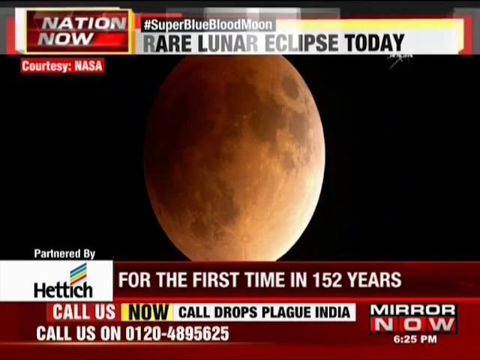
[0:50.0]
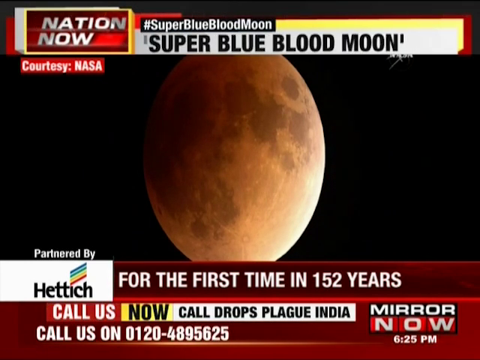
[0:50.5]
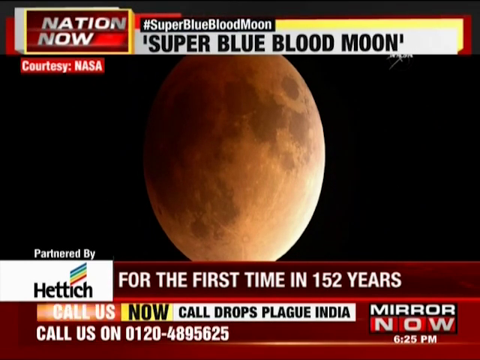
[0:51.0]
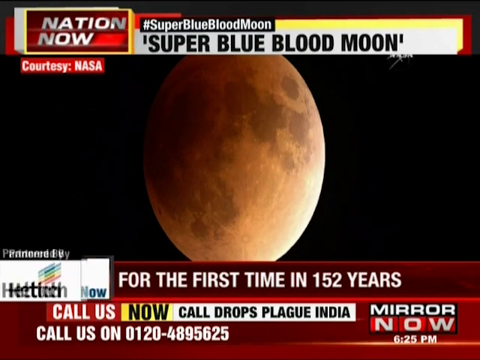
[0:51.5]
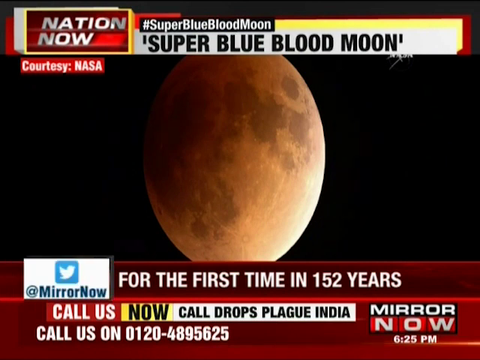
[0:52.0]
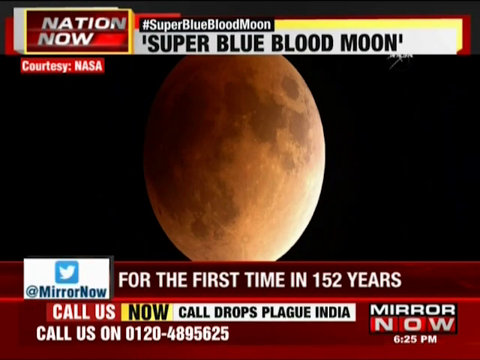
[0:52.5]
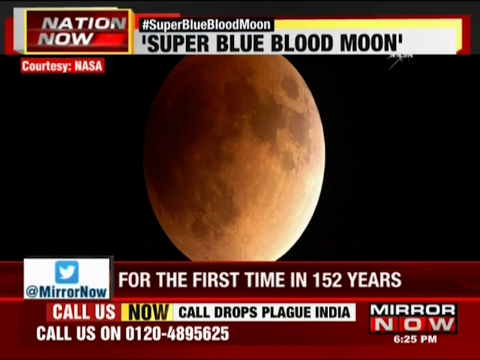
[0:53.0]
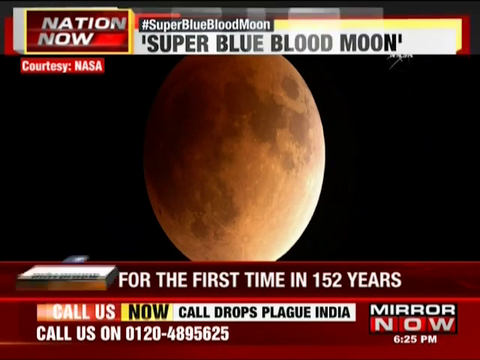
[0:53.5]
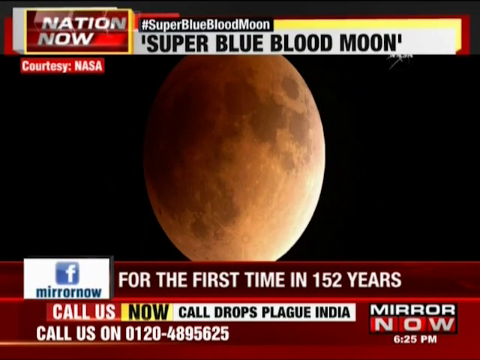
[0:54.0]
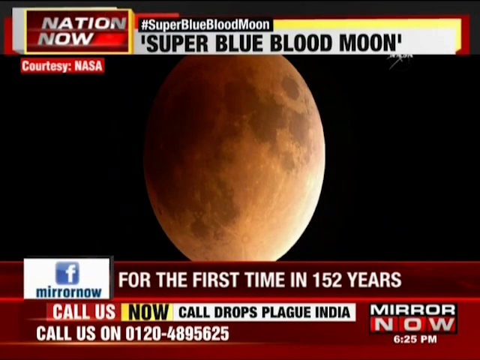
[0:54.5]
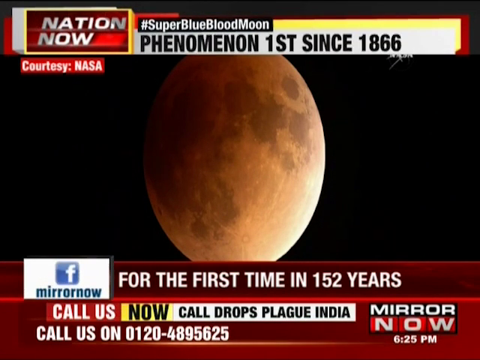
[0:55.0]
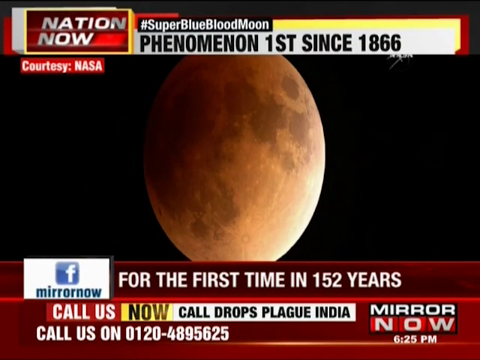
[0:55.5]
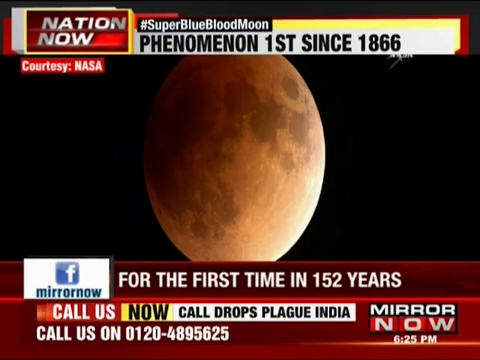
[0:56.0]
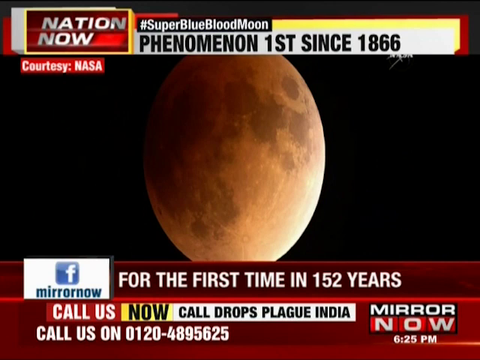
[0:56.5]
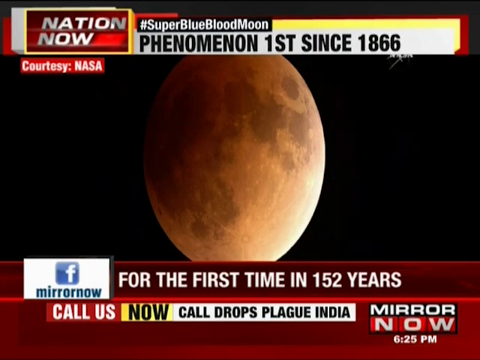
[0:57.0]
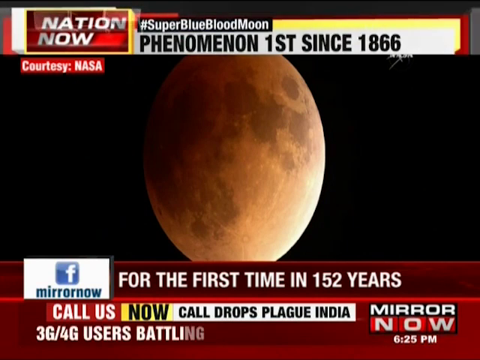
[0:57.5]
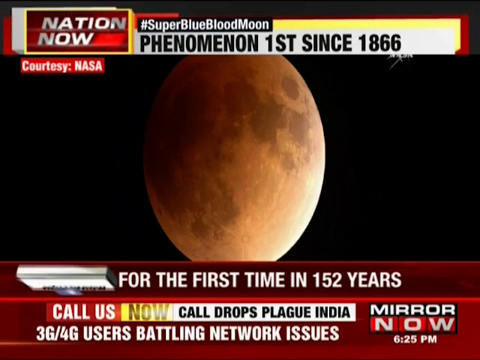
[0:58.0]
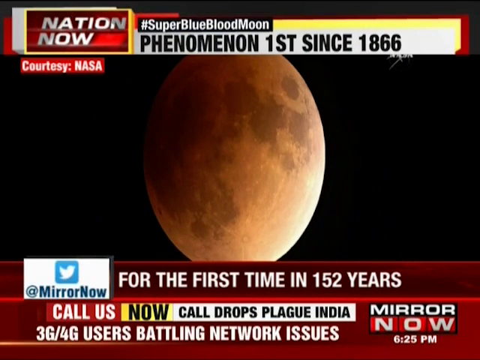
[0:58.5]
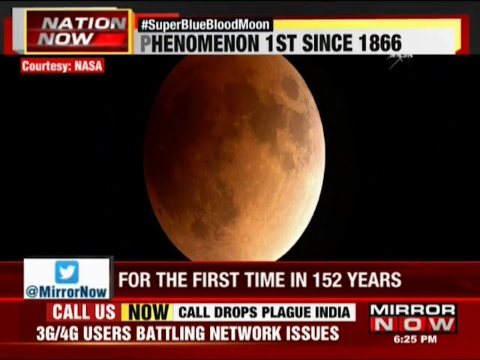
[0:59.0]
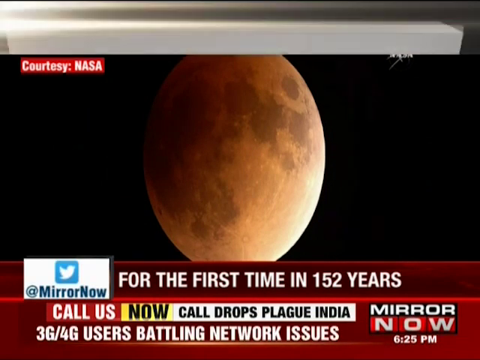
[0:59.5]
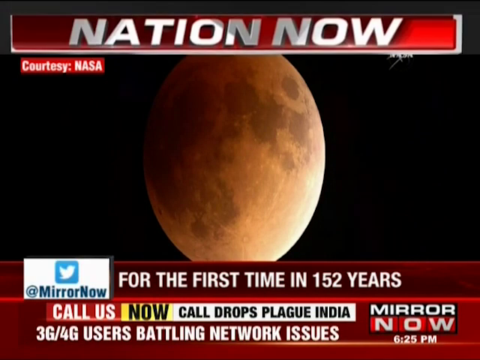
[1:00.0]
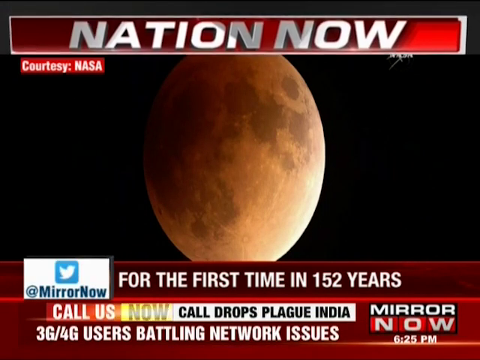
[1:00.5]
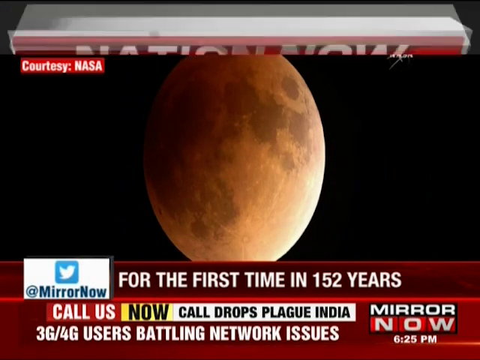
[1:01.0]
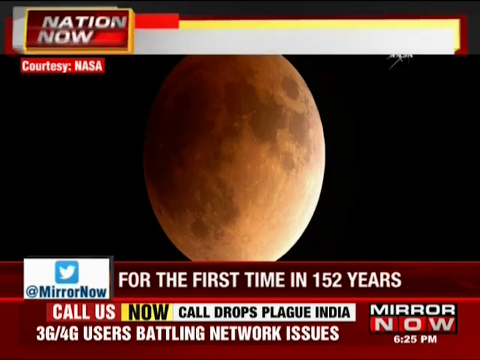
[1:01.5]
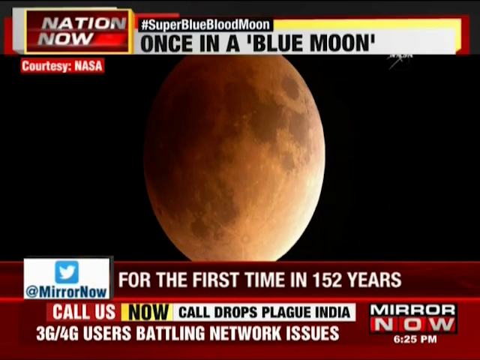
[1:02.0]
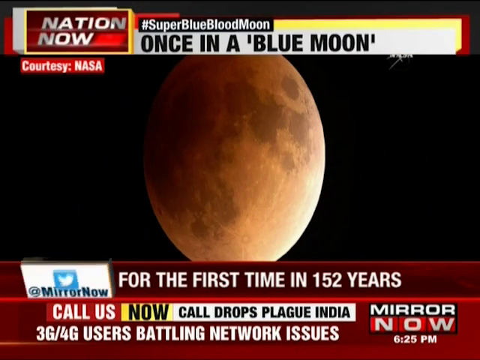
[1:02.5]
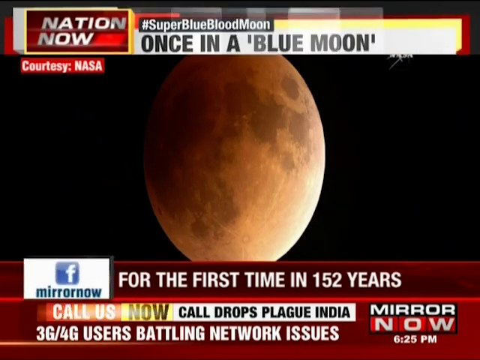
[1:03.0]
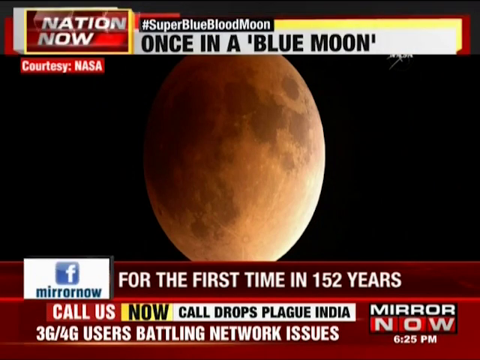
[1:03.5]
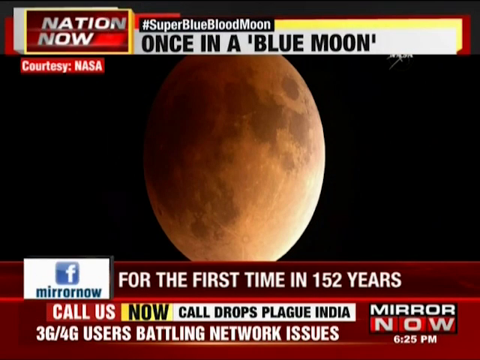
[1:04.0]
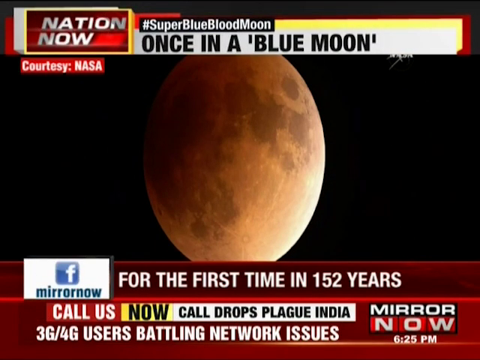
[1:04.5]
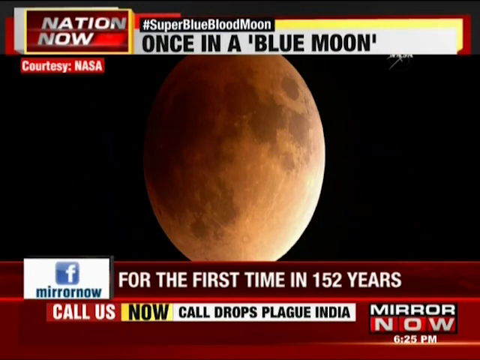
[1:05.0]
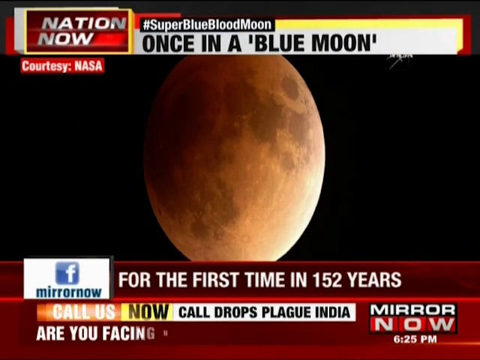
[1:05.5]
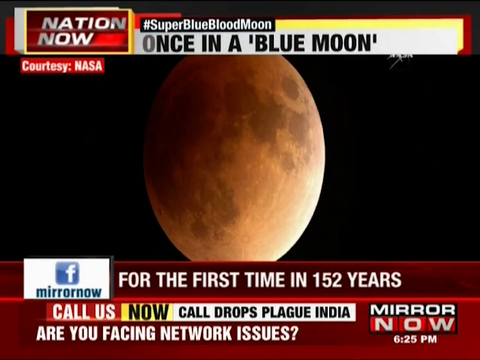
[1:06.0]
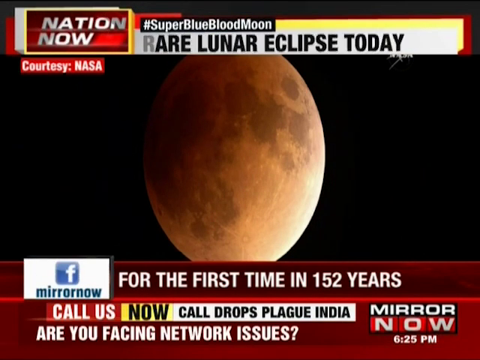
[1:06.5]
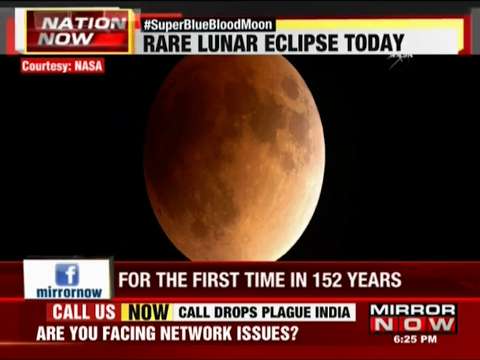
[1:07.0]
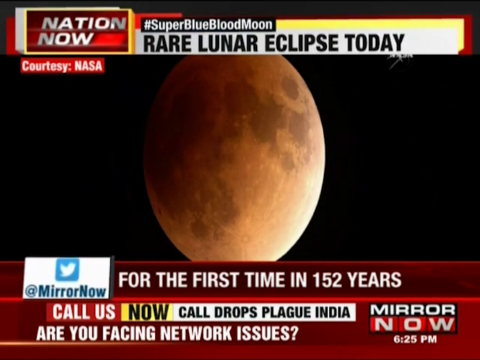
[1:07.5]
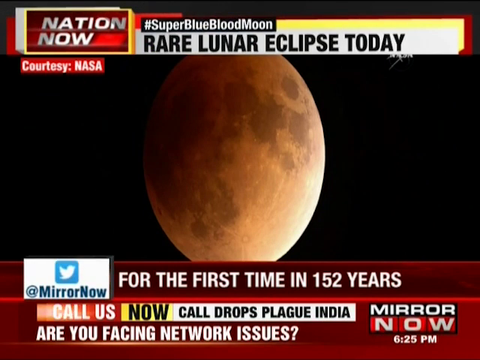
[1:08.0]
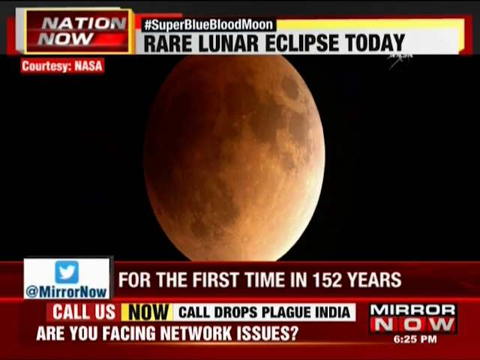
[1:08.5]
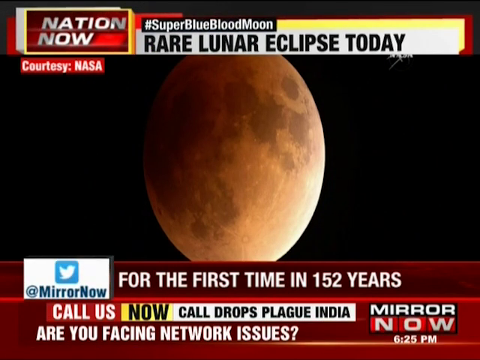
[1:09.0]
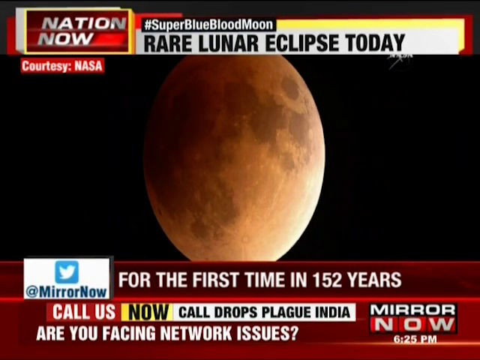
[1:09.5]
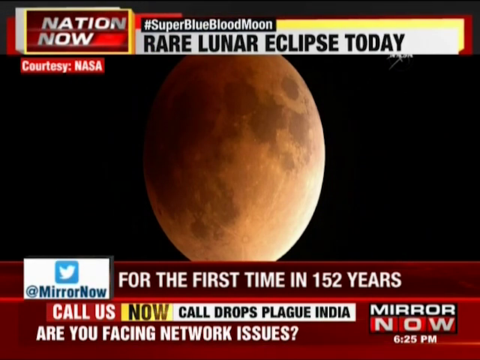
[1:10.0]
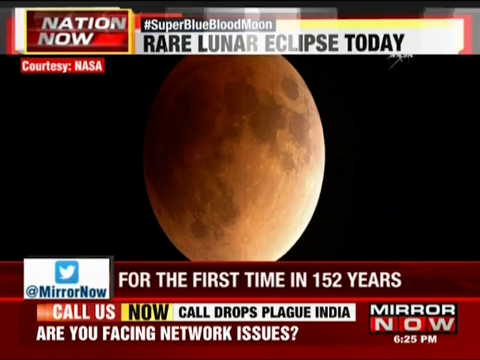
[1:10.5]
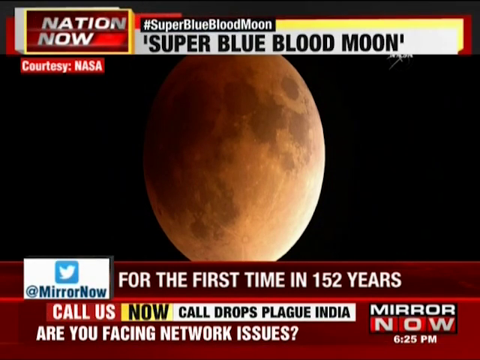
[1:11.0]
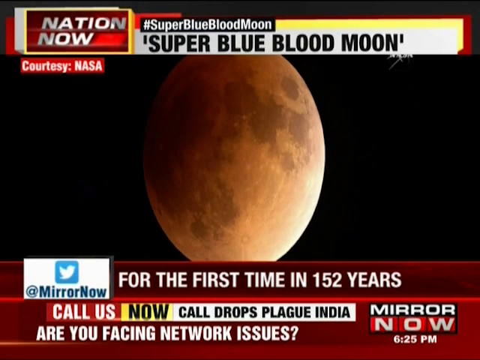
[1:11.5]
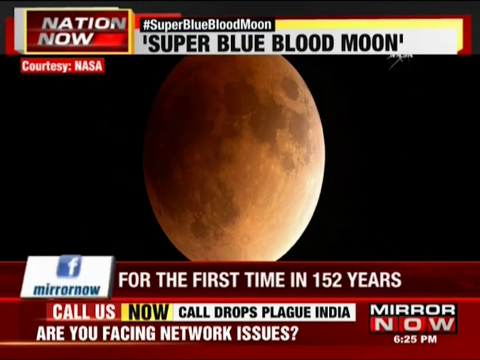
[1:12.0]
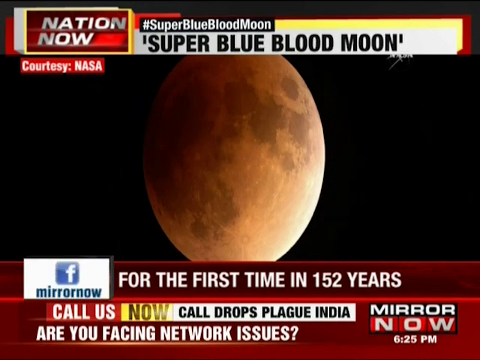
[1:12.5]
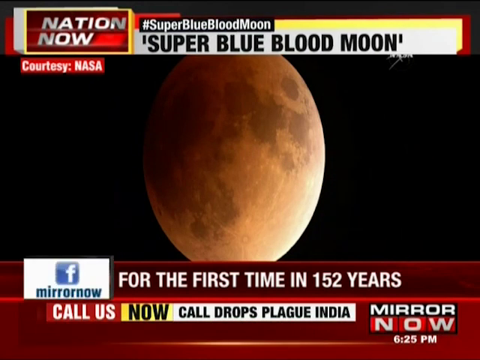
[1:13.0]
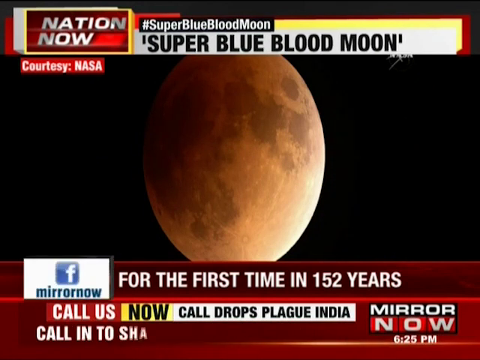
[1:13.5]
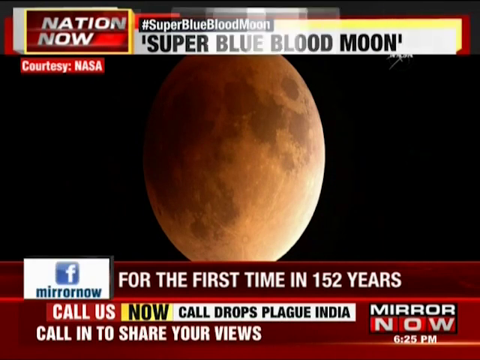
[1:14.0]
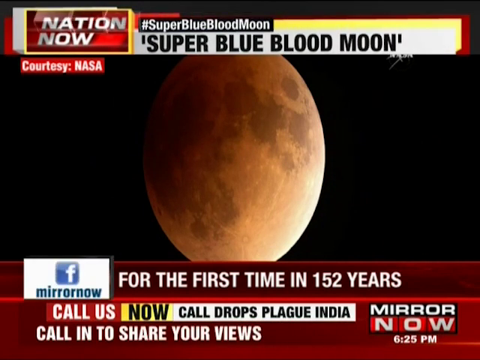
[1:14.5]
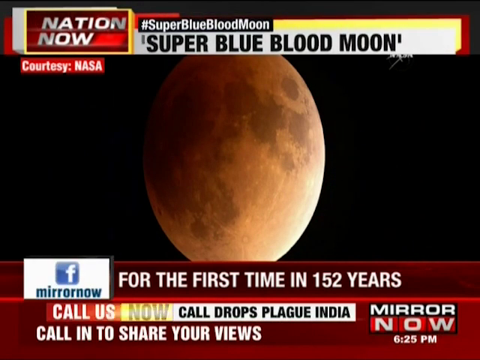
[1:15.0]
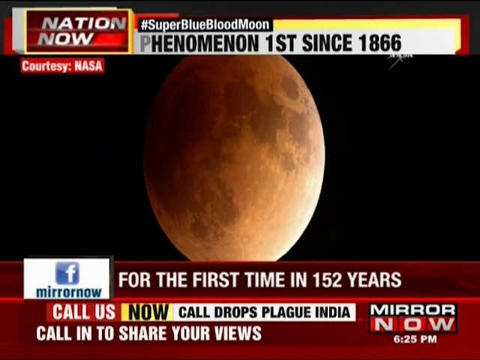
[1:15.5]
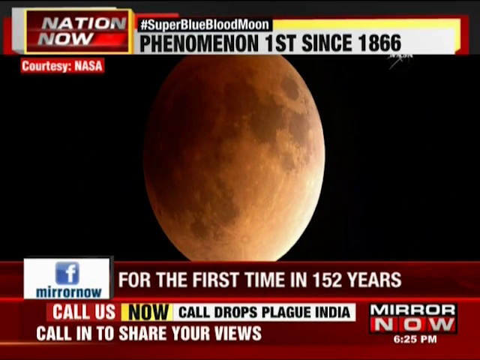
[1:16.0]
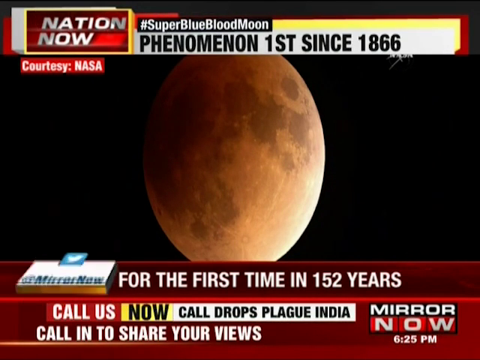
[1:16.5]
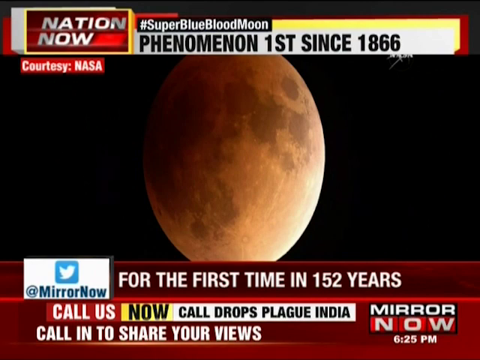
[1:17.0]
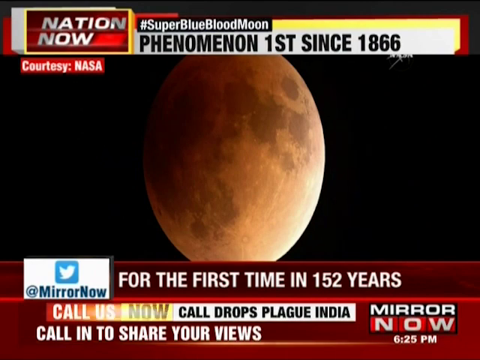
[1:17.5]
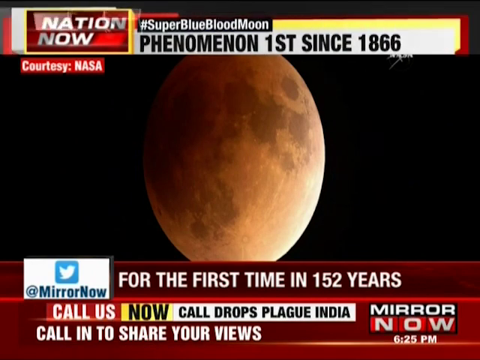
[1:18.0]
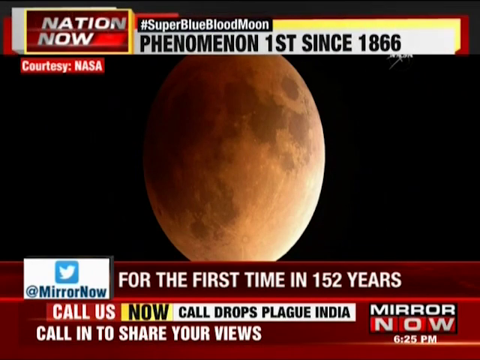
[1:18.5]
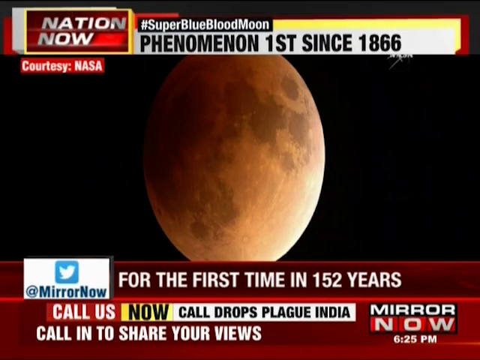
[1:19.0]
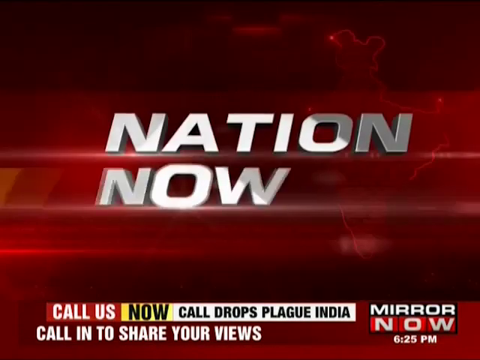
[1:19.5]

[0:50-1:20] The coverage concerns the super blue blood moon phenomenon, first seen in 1866, and a lunar eclipse today, occurring after 152 years. The moon seems to be somewhat red.